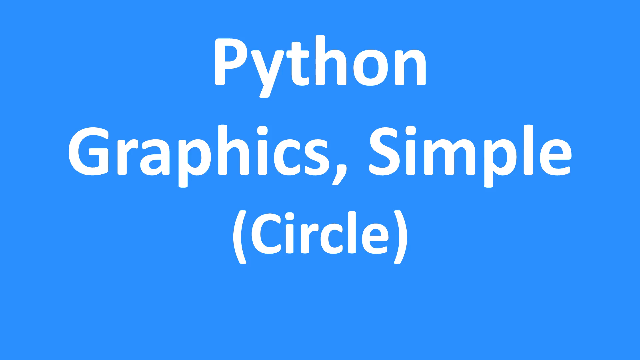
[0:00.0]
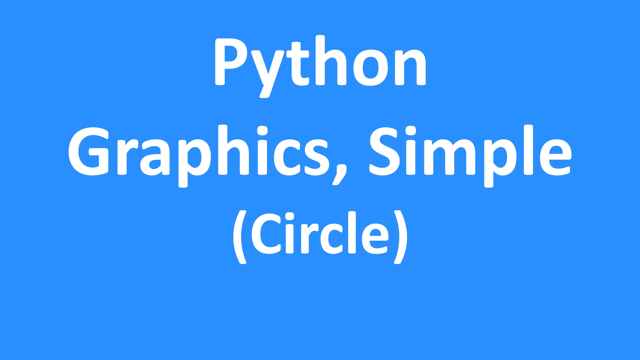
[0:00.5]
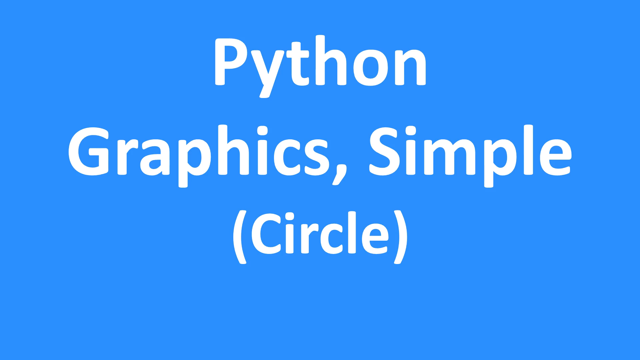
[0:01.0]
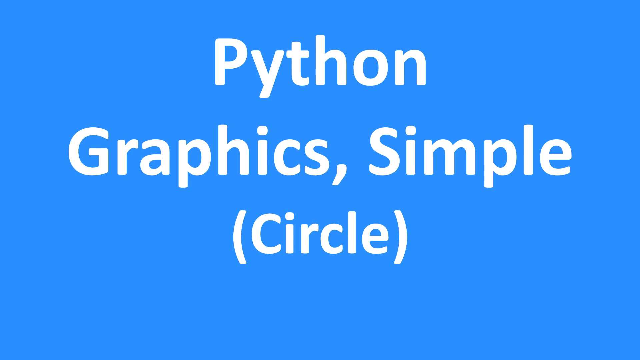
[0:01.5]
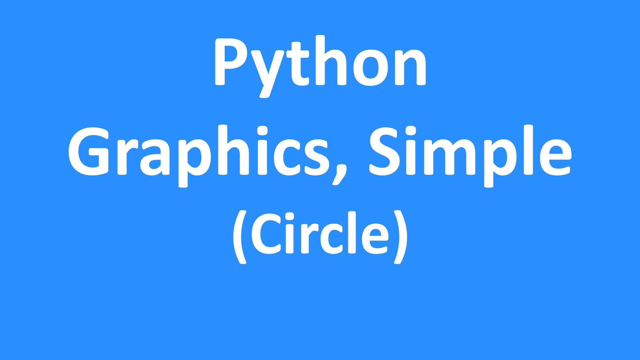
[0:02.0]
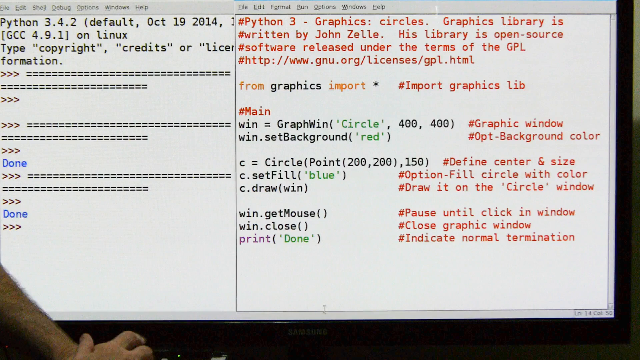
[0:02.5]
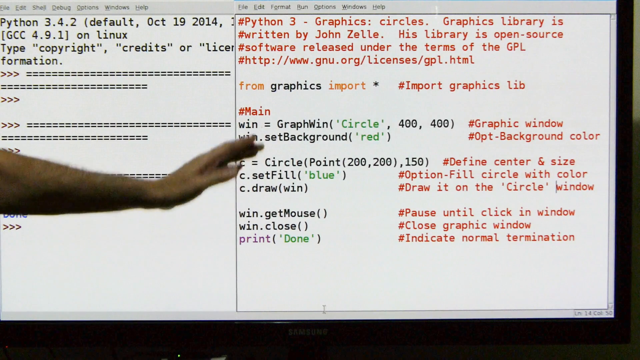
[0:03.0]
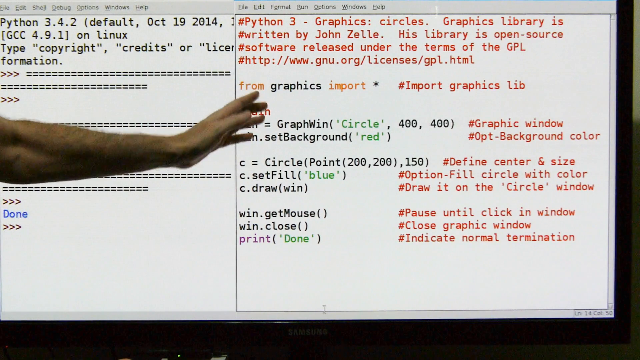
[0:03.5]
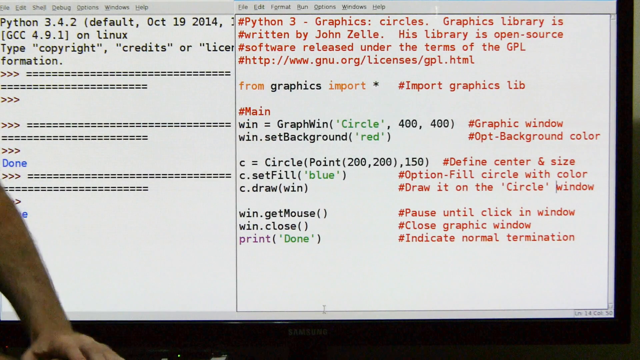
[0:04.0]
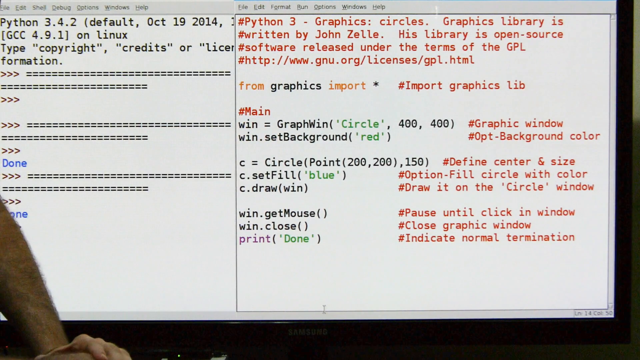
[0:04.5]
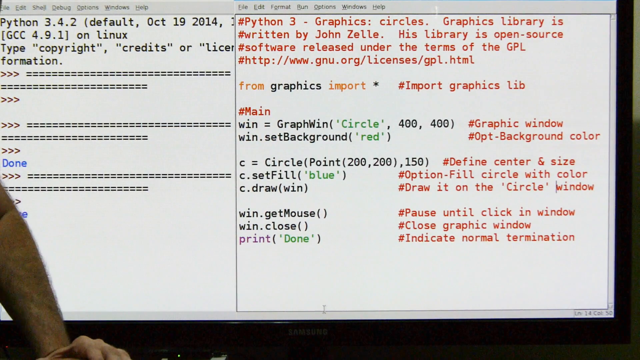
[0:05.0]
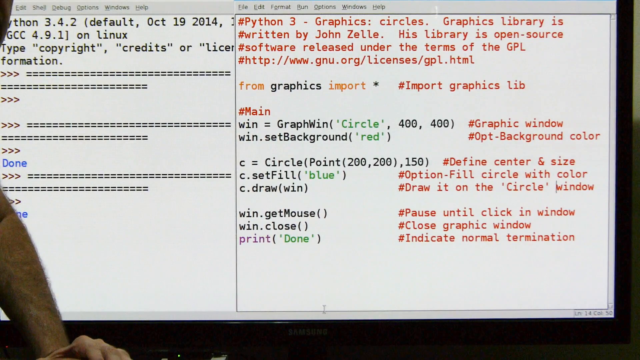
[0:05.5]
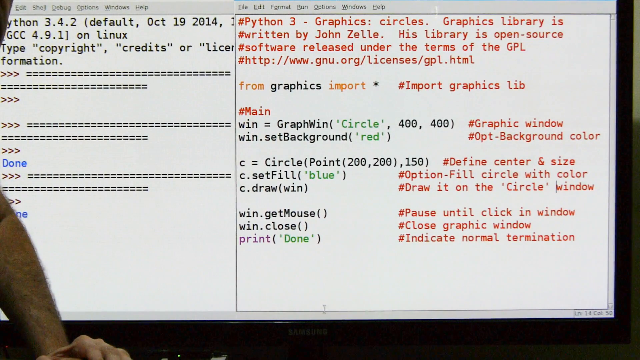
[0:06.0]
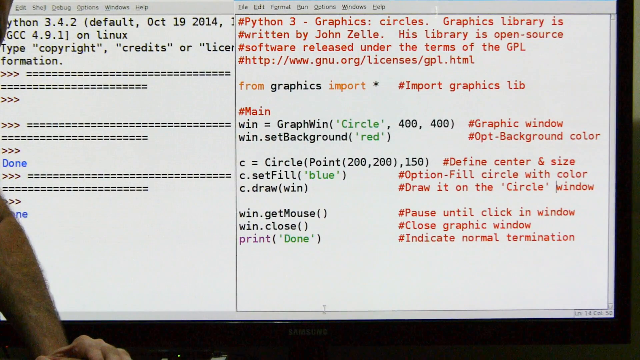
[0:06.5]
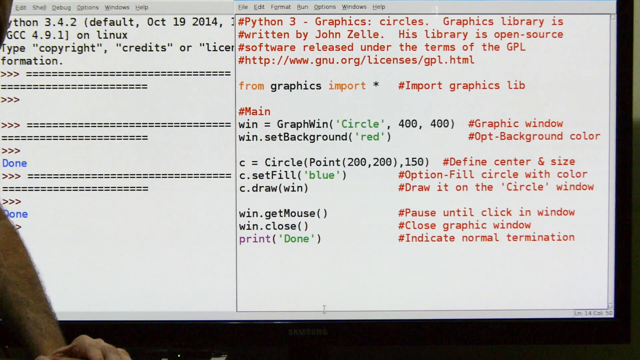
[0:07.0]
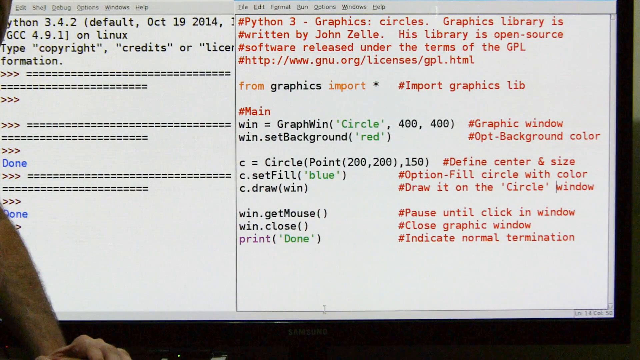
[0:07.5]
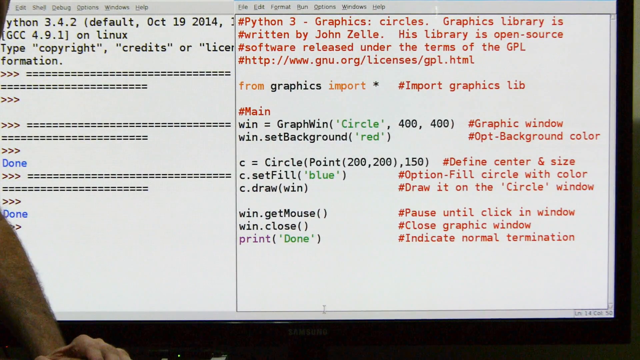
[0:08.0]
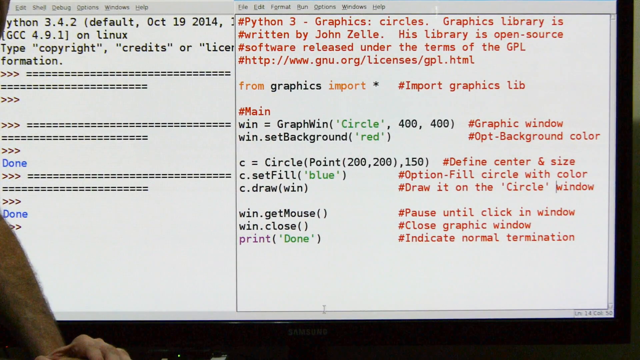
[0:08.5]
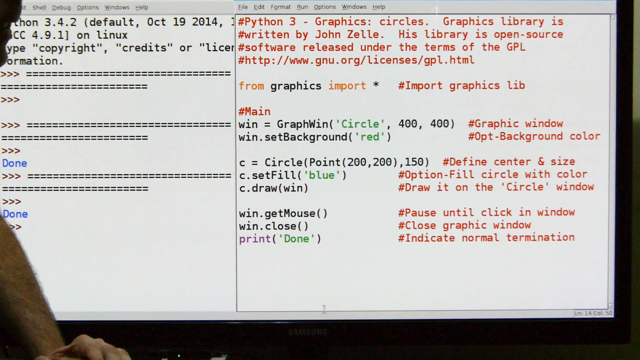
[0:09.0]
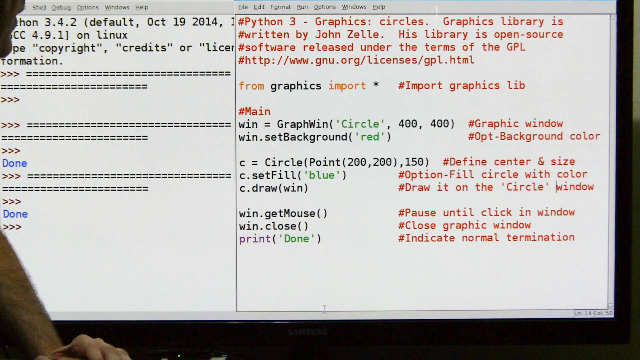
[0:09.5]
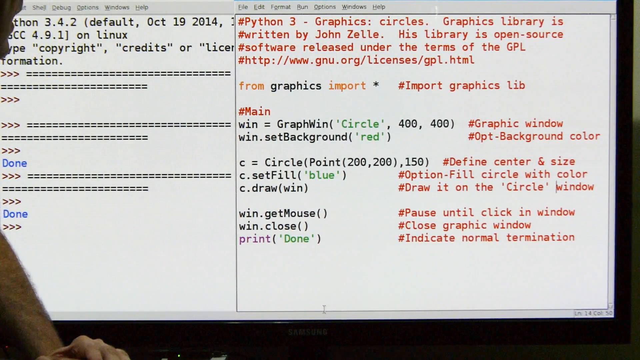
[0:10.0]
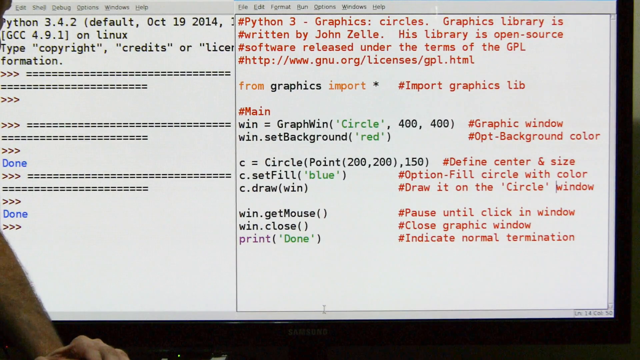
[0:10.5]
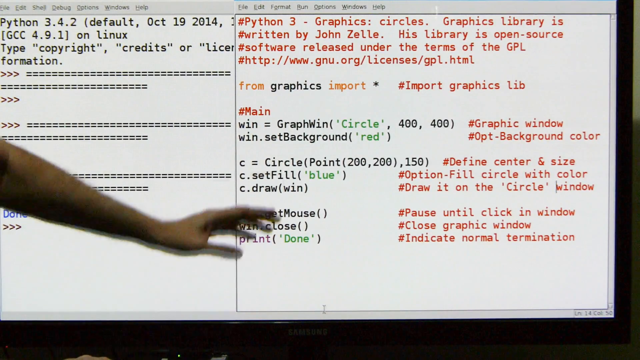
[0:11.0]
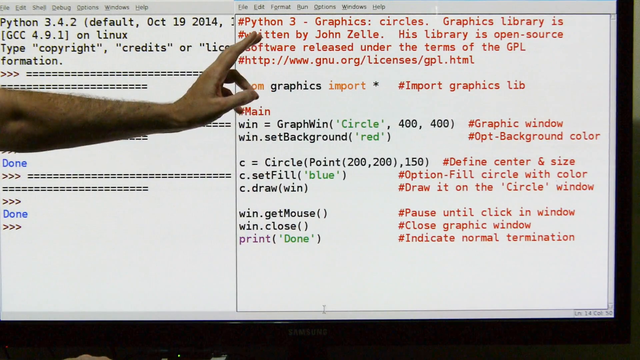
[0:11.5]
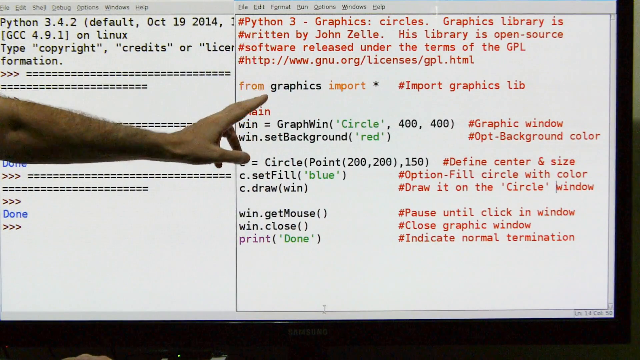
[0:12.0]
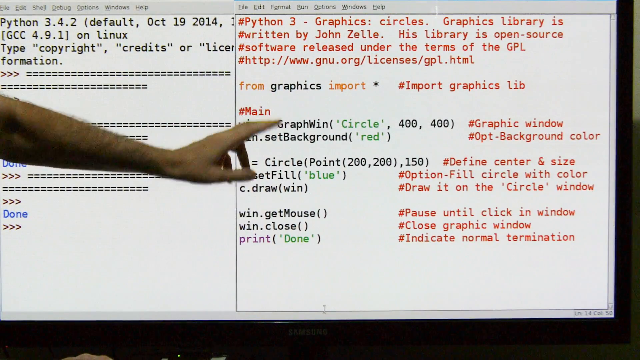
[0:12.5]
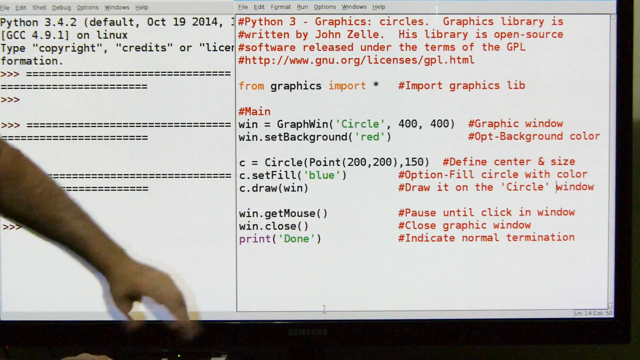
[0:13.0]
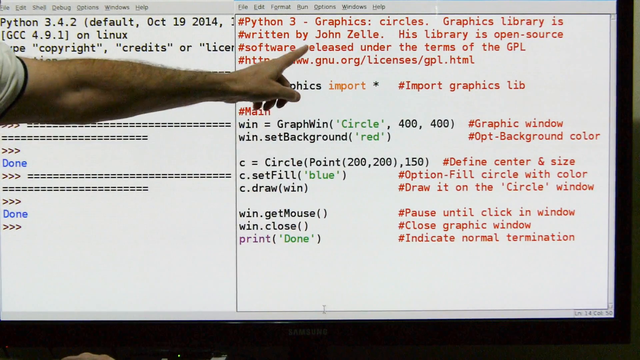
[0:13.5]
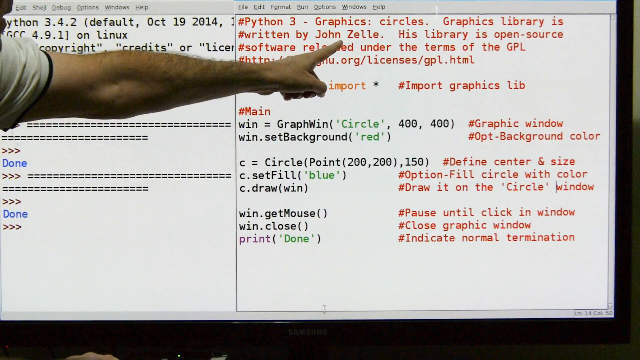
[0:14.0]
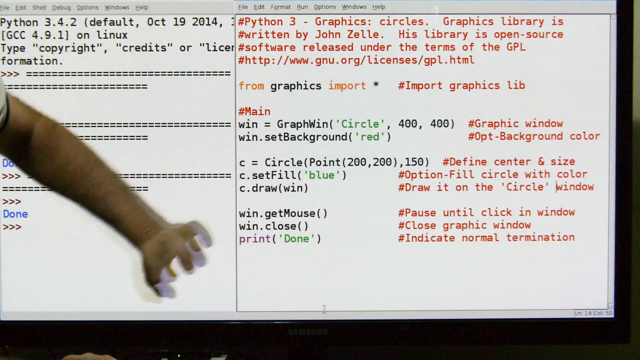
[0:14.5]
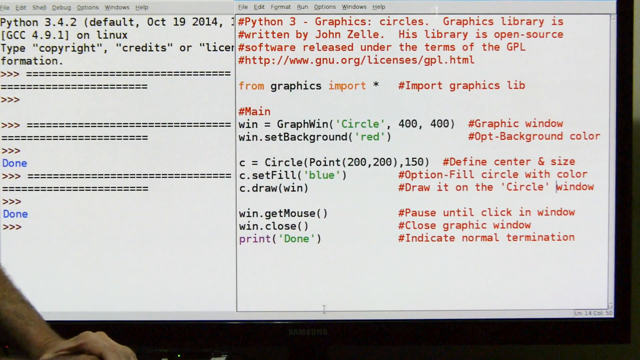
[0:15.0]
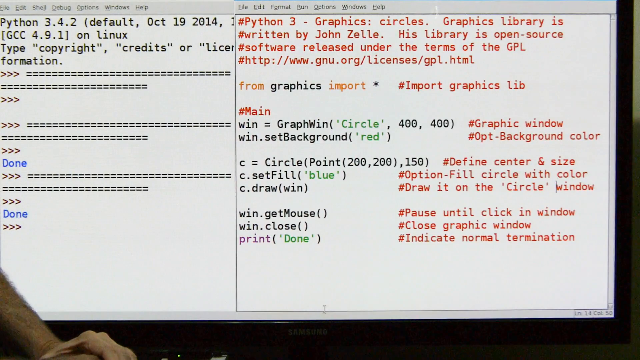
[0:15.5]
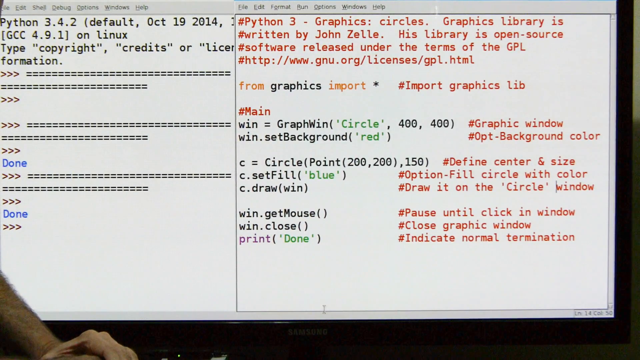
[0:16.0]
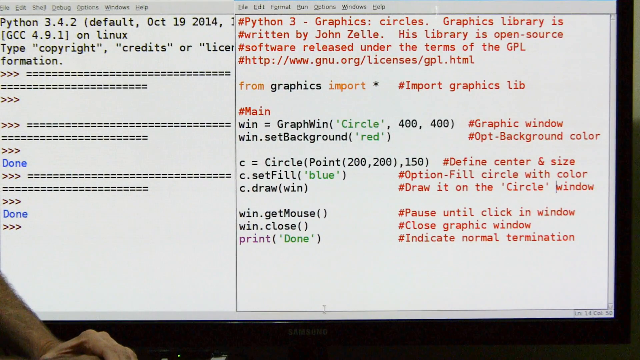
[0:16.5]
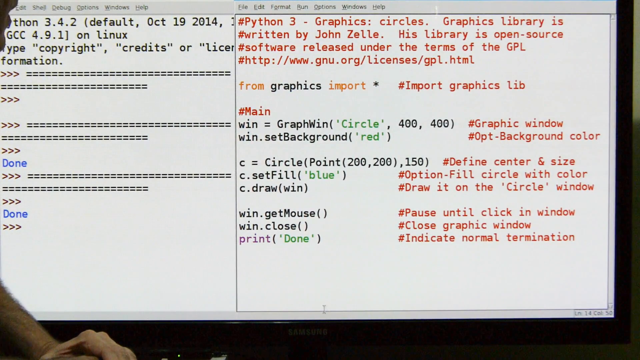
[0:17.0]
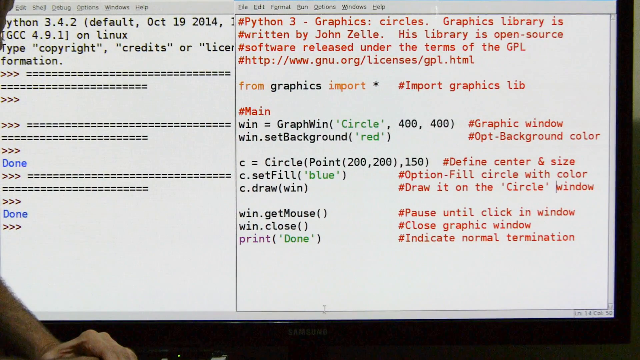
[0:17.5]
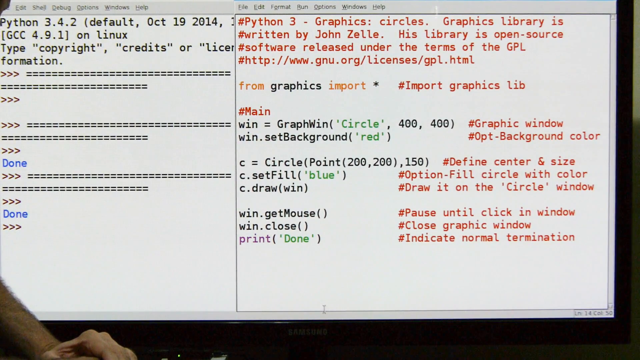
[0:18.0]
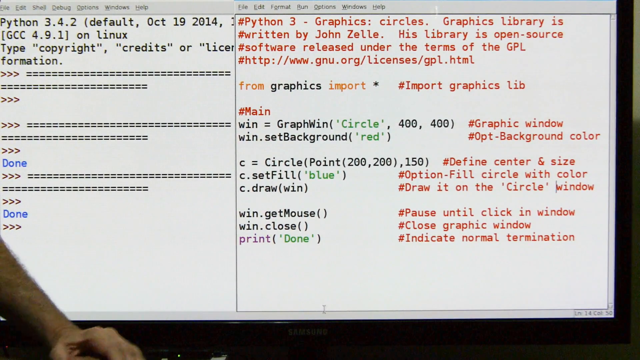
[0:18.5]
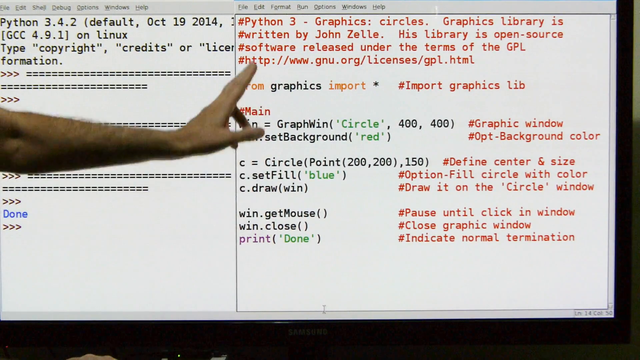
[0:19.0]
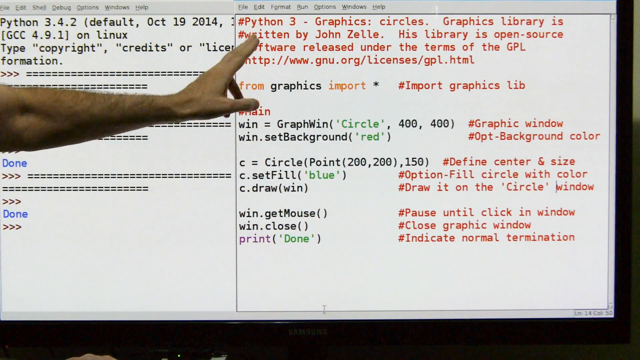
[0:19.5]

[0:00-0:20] A teacher gives a presentation on Python graphics circles. He seems to be explaining to students, using hand gestures and pointing at the board. Words are written in different colours: red, orange, black and green, and on the left-hand side some words are in blue; the teacher is apparently explaining what the colours mean. The window has menu options for file, edit, format, run, options, windows and help.